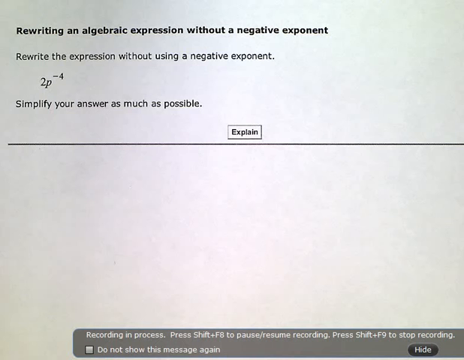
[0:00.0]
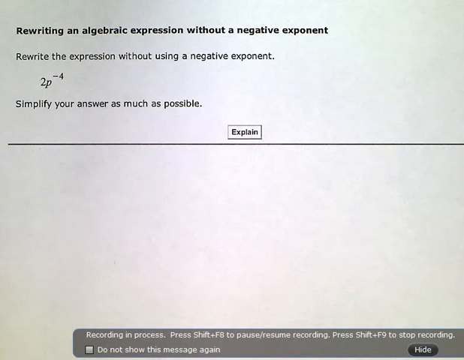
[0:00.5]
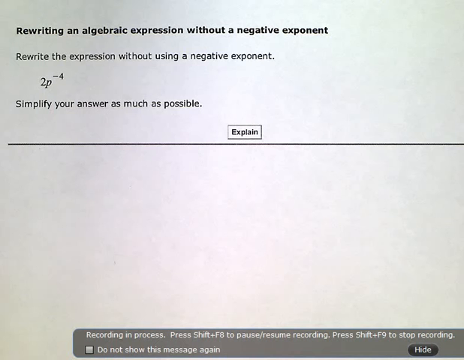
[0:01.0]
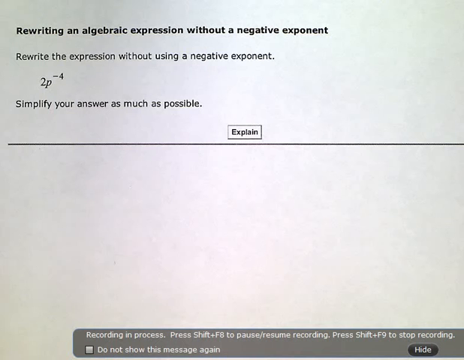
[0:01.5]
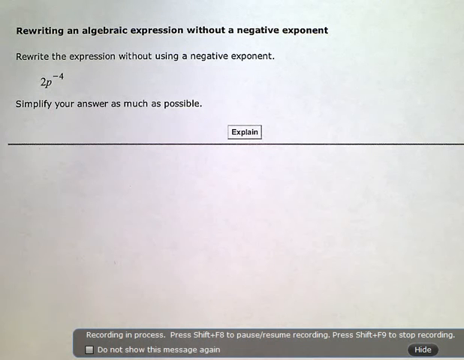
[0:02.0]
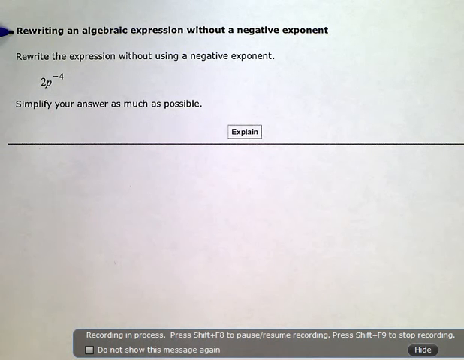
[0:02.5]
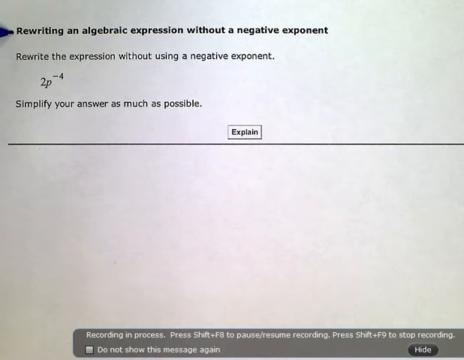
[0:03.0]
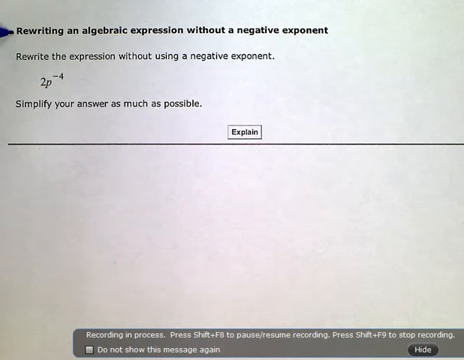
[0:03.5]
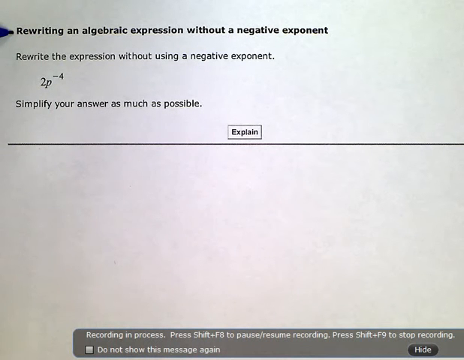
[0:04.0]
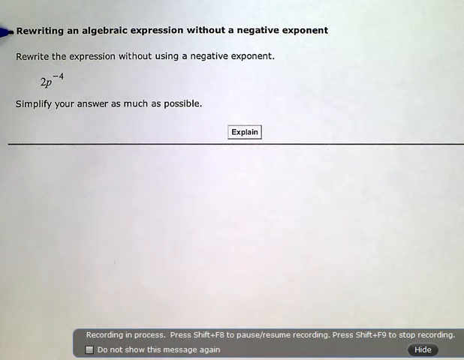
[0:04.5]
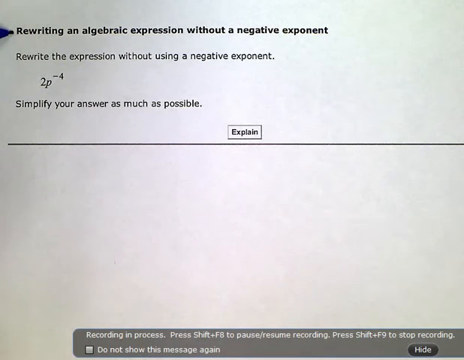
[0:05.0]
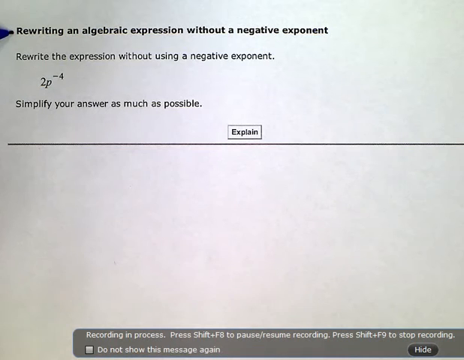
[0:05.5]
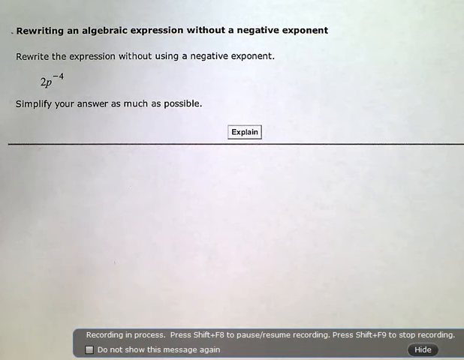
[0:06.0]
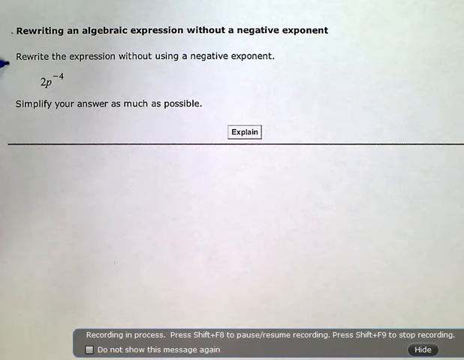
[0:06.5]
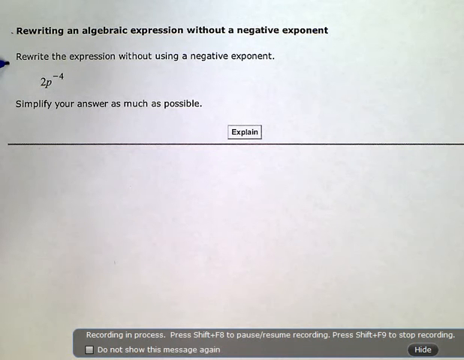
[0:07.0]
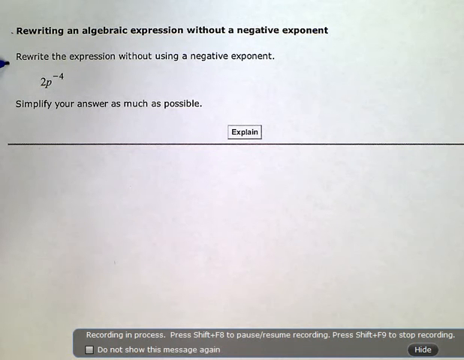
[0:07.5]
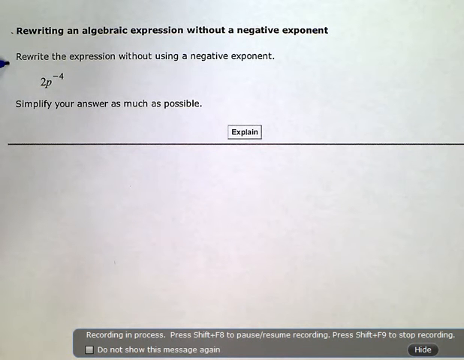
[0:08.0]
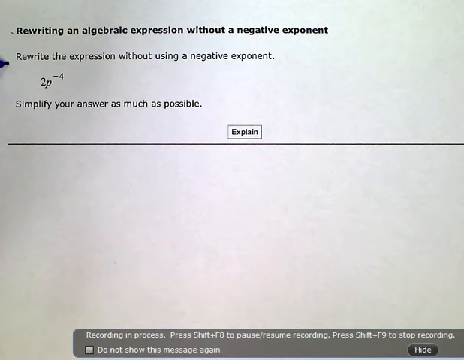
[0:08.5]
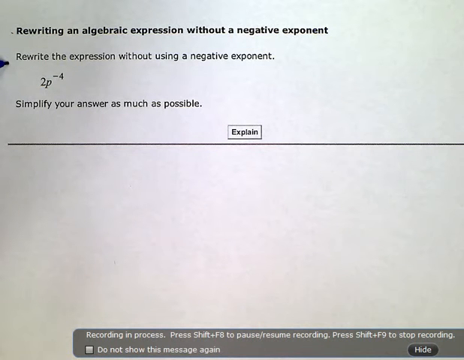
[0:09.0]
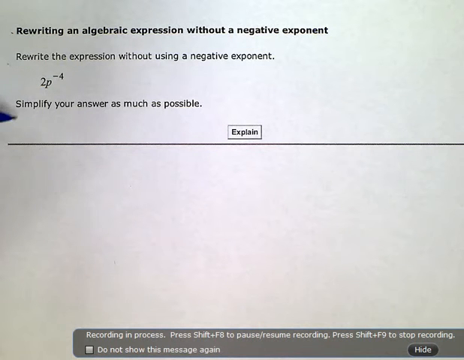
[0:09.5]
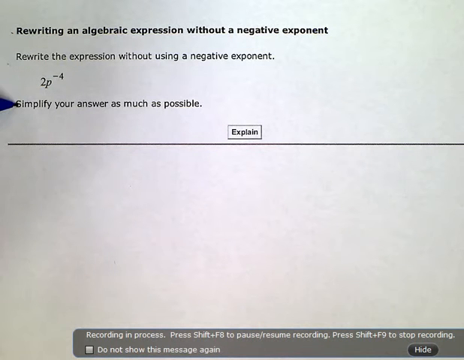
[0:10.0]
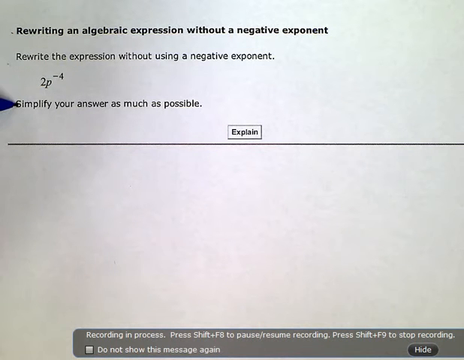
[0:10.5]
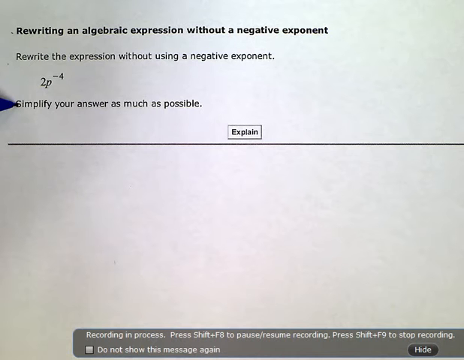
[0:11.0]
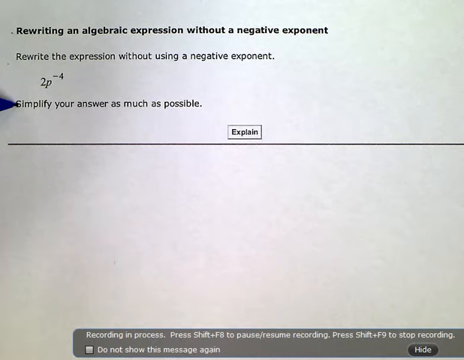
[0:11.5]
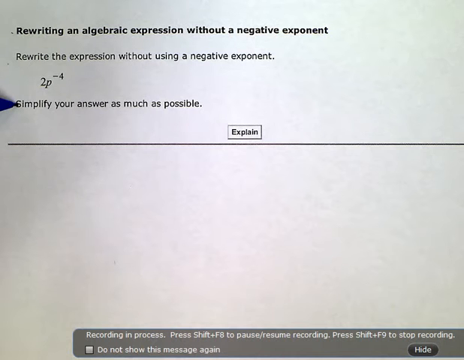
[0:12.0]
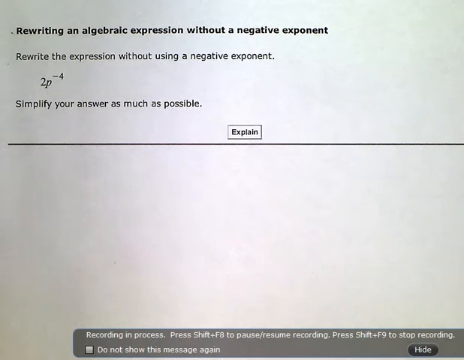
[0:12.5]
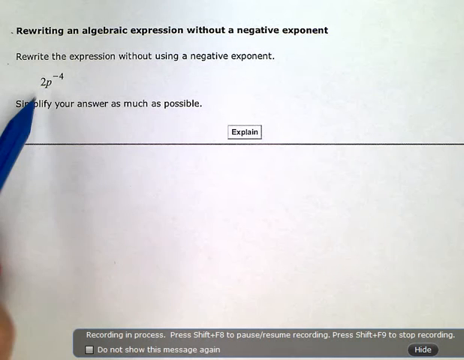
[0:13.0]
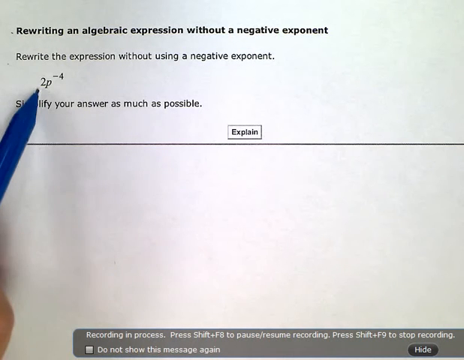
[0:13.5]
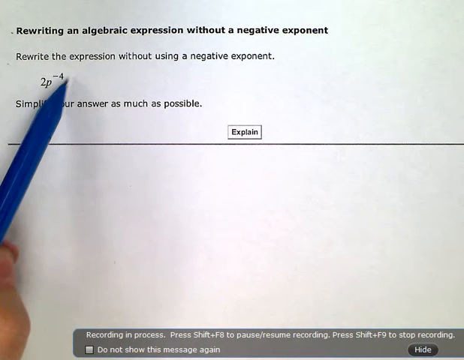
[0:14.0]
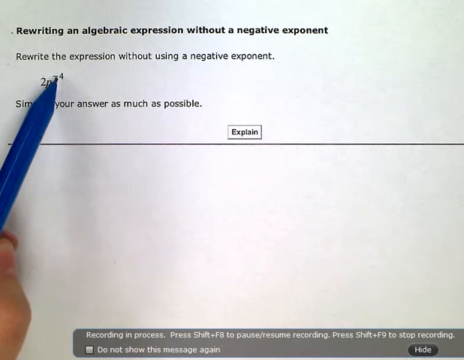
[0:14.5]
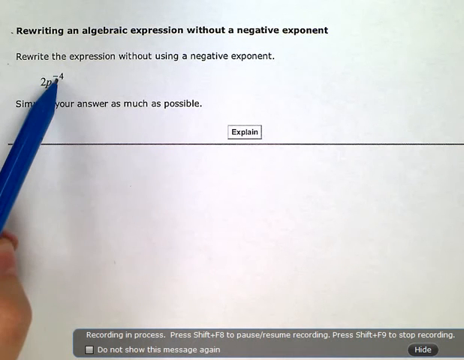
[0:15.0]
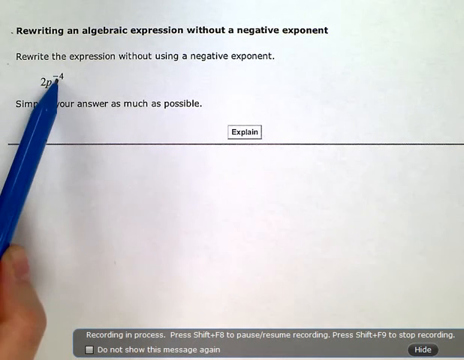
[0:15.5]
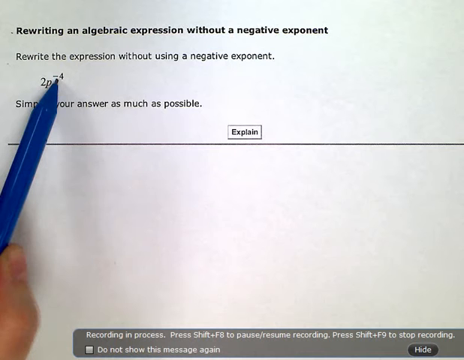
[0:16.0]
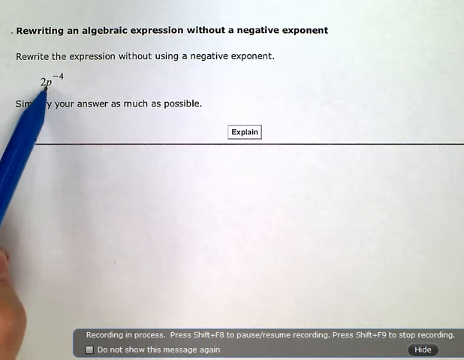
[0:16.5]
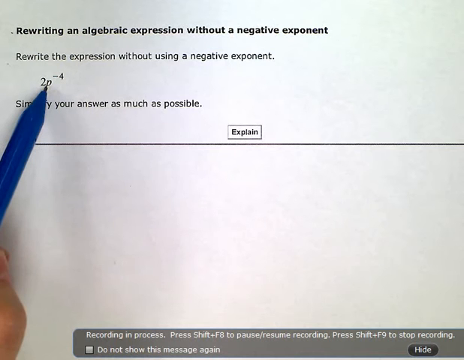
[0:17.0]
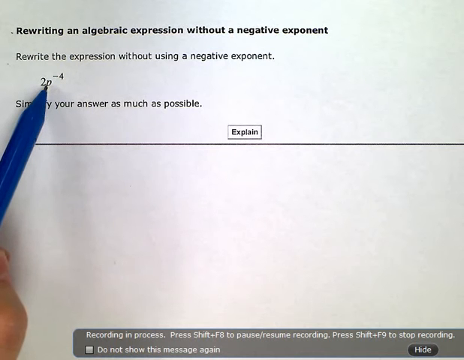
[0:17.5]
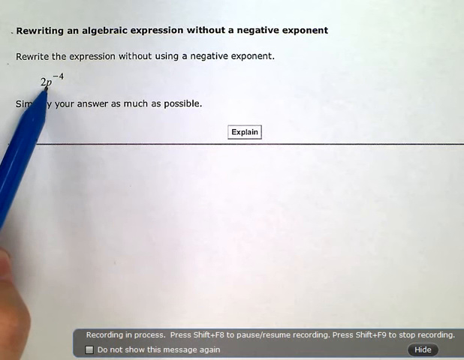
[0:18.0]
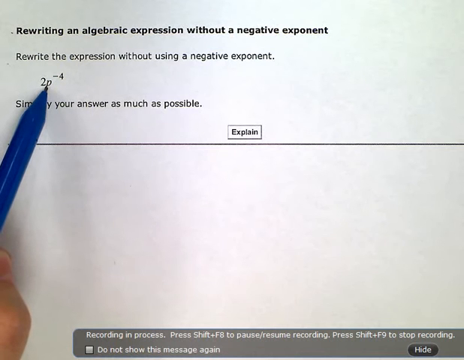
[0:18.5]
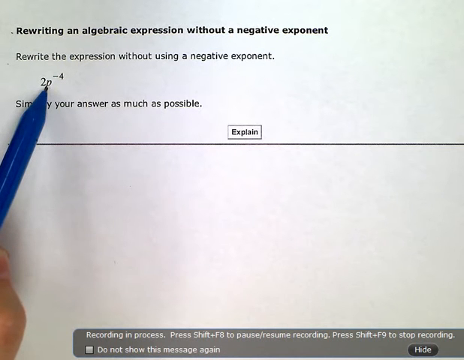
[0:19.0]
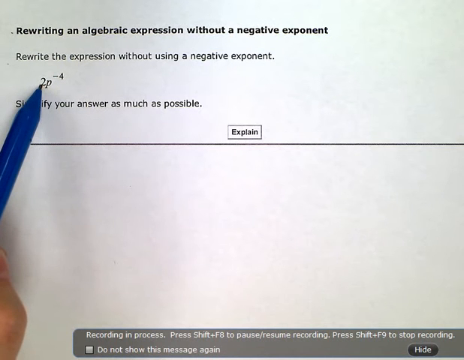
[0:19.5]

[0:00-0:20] A white page is highlighted in the center of the screen with the text "rewriting an algebraic expression without a negative exponent." Below it is the instruction "rewrite the expression without using a negative exponent" followed by the expression 2p to the negative fourth power, and then "simplify your answer as much as possible and explain." A space is left at the bottom of the page for the explanation. A pen pops up on the left-hand side and points at the equation.